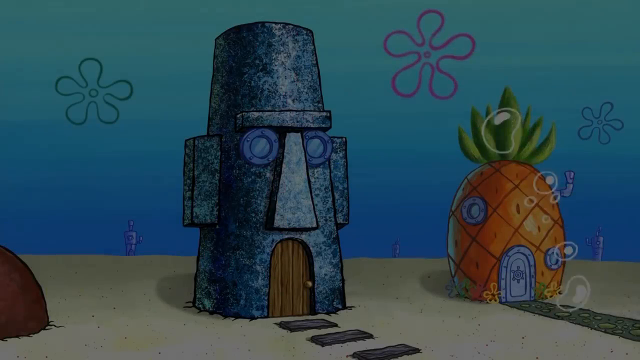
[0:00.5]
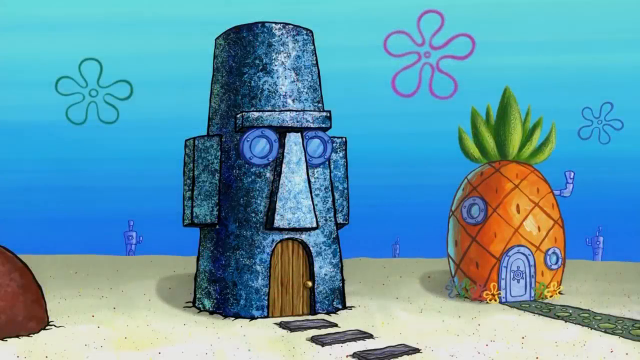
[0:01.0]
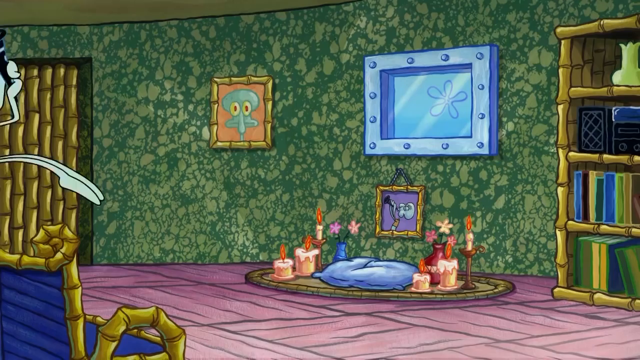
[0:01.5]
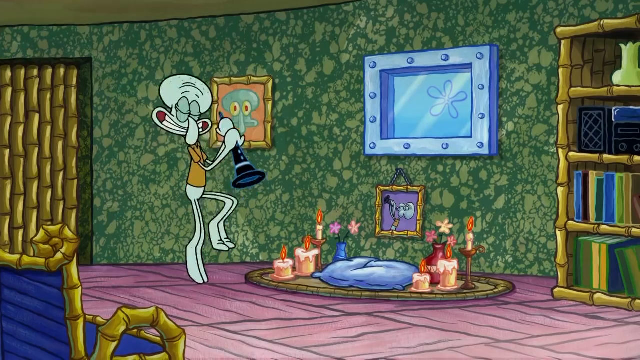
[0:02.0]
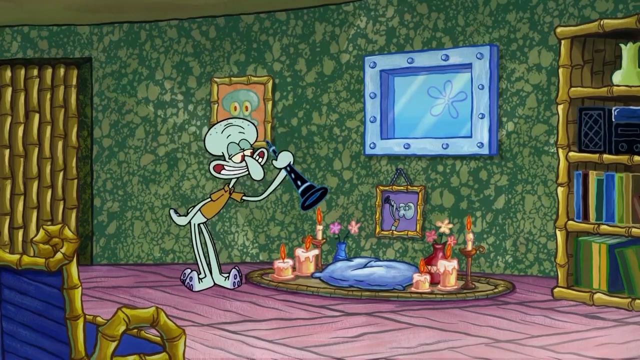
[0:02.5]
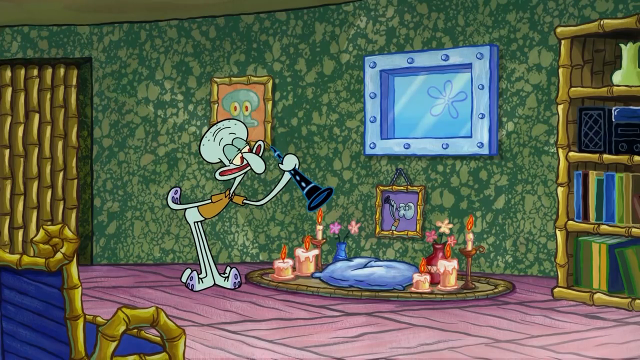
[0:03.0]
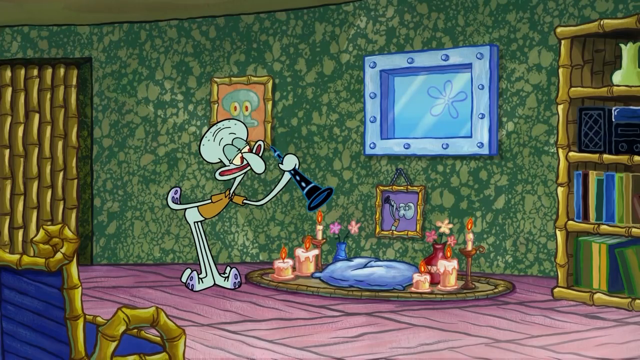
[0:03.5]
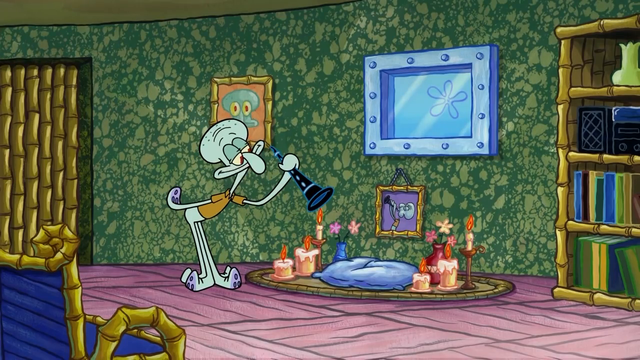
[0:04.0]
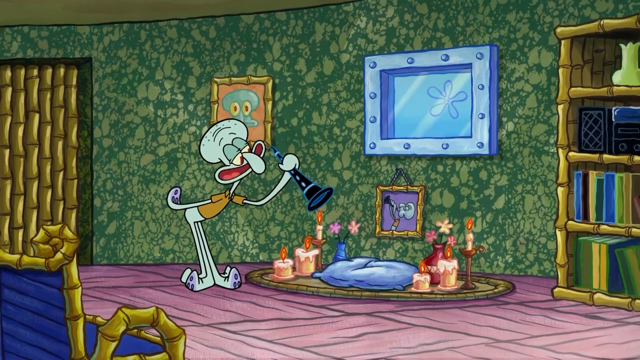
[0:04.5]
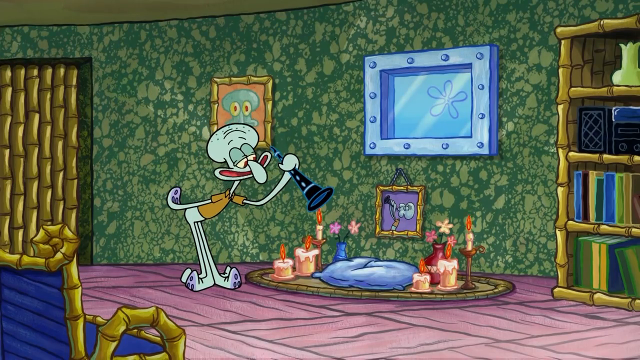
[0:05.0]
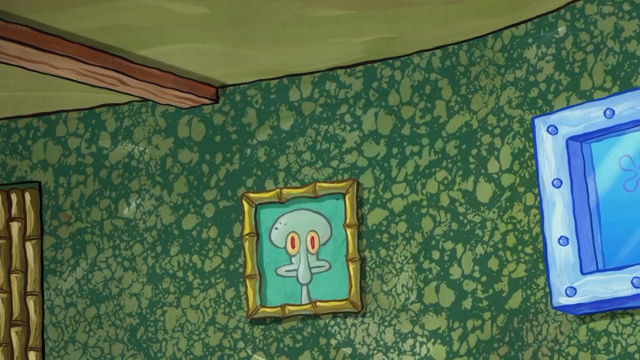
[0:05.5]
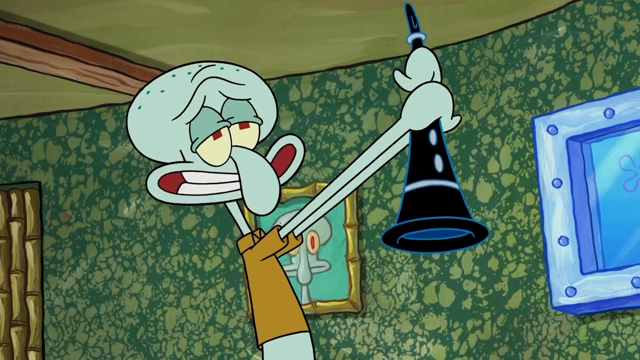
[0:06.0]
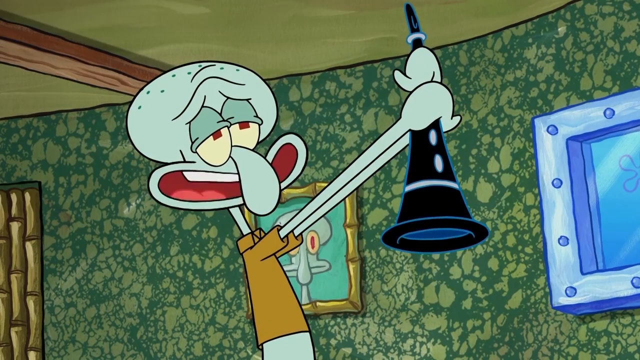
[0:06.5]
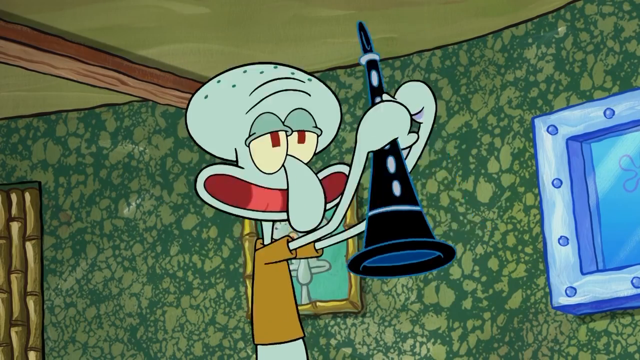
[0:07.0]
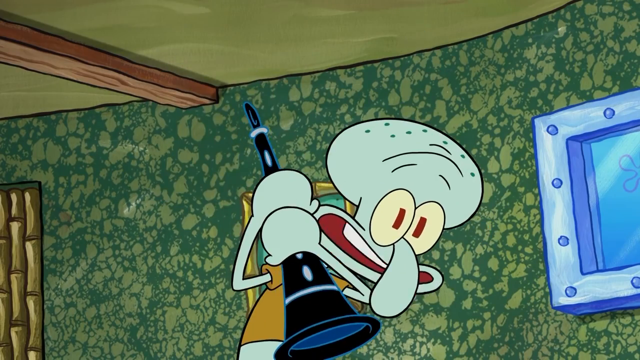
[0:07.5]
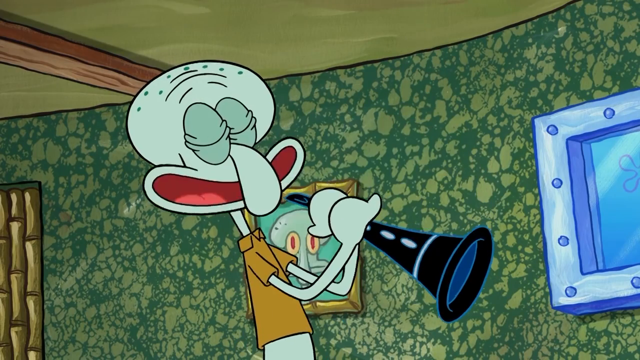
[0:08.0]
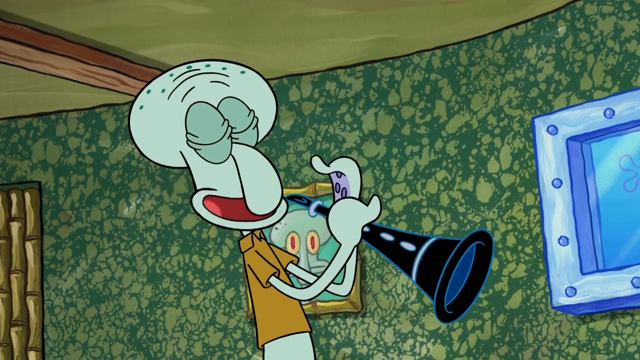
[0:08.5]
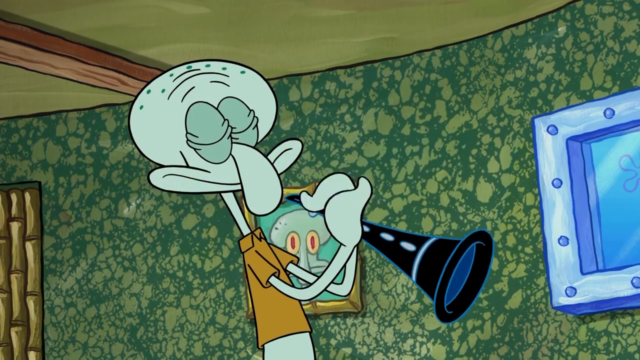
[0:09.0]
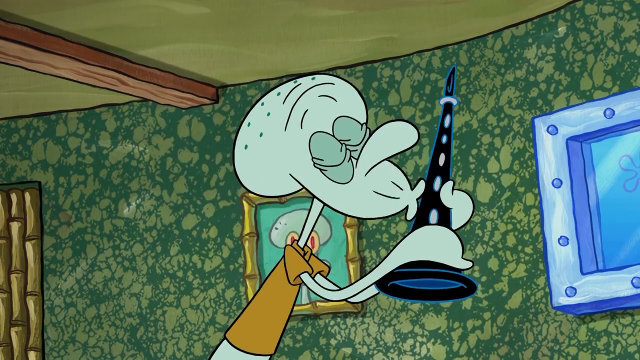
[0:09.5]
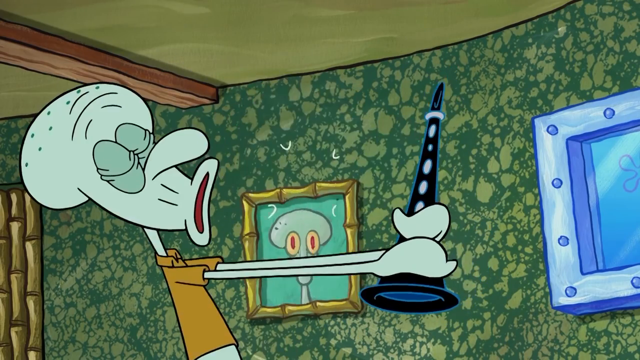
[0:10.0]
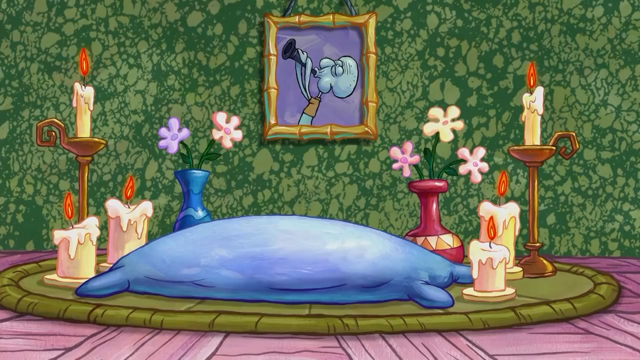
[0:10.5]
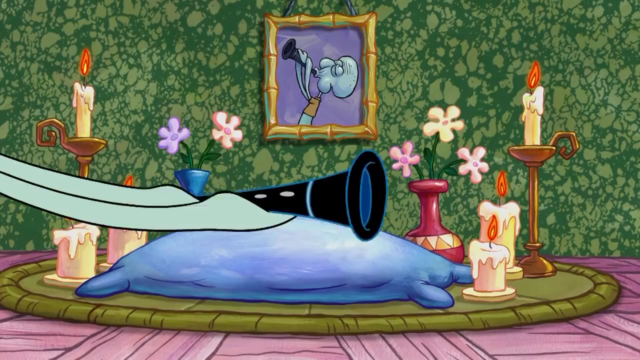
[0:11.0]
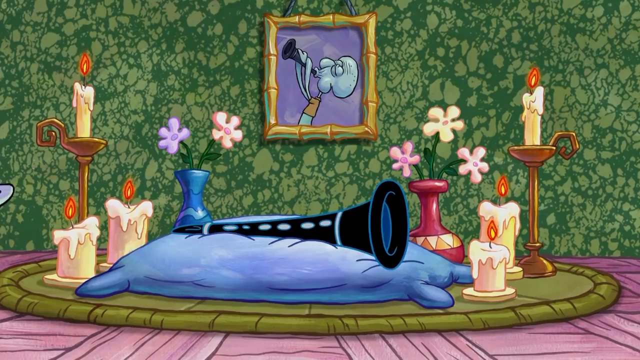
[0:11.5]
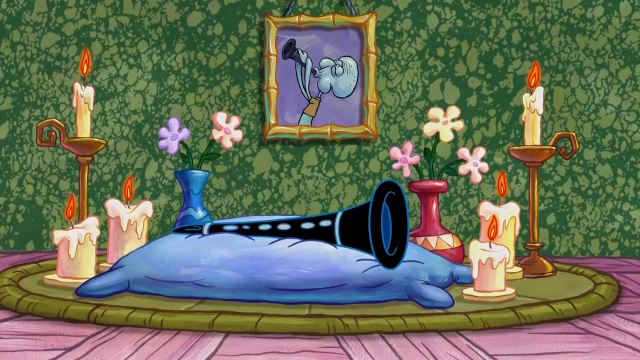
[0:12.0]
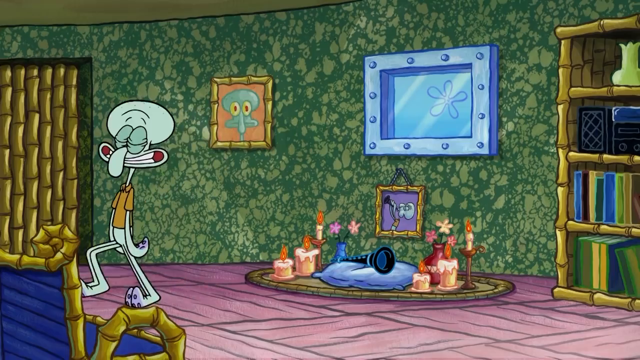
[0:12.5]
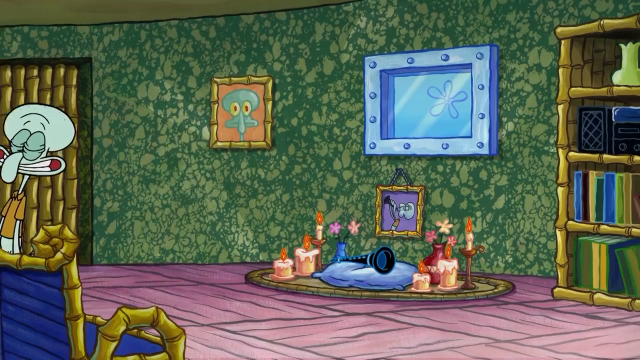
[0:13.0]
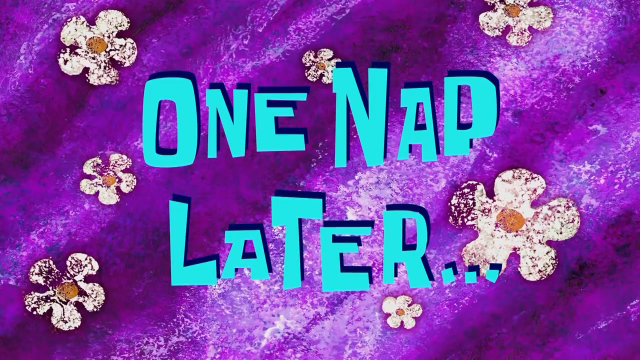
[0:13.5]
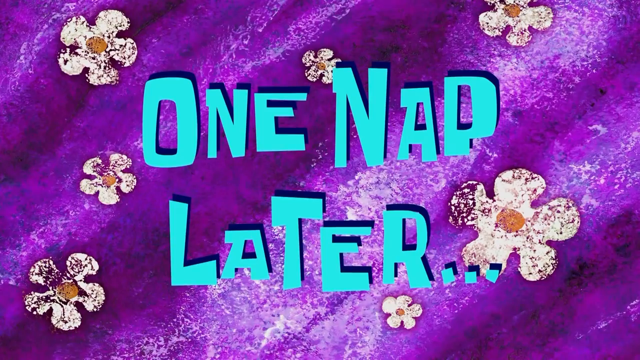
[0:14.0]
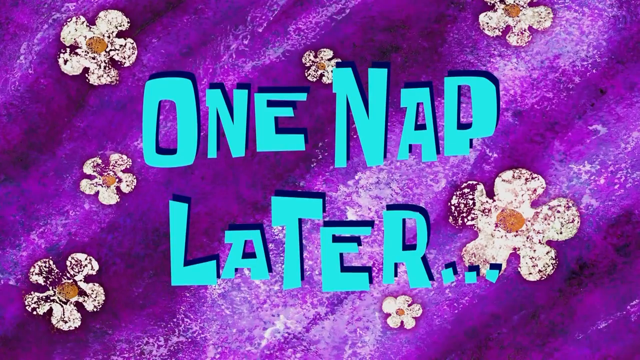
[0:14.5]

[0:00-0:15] The video is from the television show SpongeBob. The opening shot shows two houses at the bottom of the sea: one is a pineapple, and the other is more of a rock sculpture. It quickly cuts inside one of the structures, where a green, squid-looking creature in a brown shirt holds a telescope in his hands and looks at his belongings. There is a pillow on the floor, and lit candles are all on top of a rug on the wall. There is a picture of himself, a window in the wall to see outside, another picture of himself on the wall, a door on the left, and a bookcase on the right that looks to be made of bamboo, with books and a stereo on it. He talks to himself as he holds the telescope, clutches it, gives it a kiss, and sets it down on a blue pillow that is on the rug beside all the candles. It then cuts to a kind of transition slide saying "one nap later" in blue font with a darker shadow behind it, with white flowers with yellow centers on a background of shades of purple.